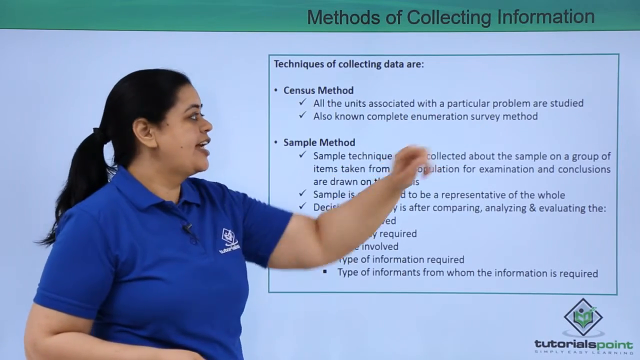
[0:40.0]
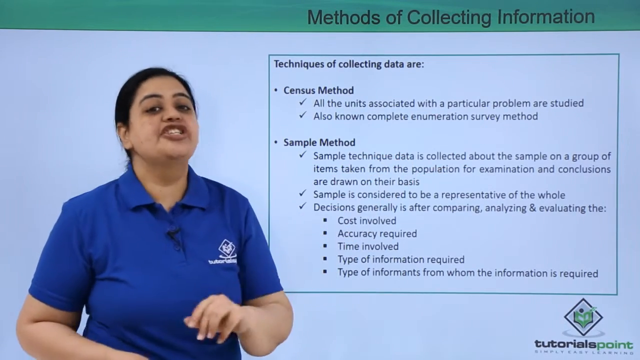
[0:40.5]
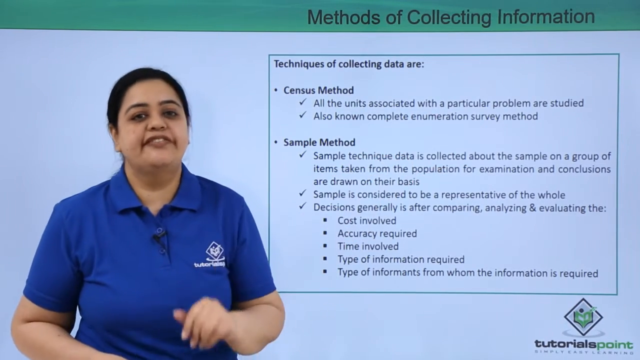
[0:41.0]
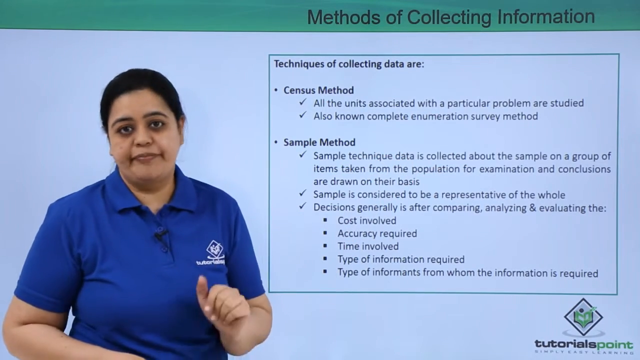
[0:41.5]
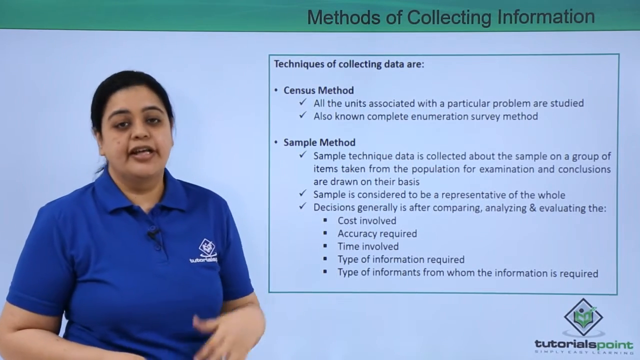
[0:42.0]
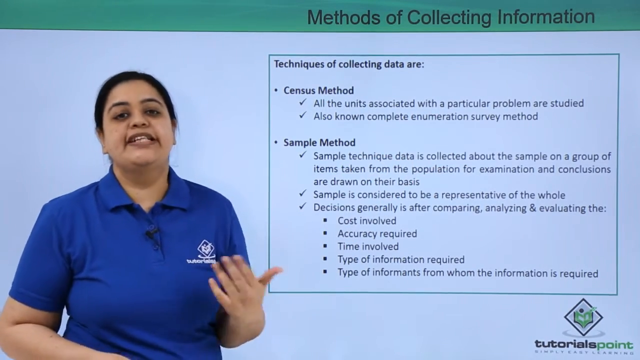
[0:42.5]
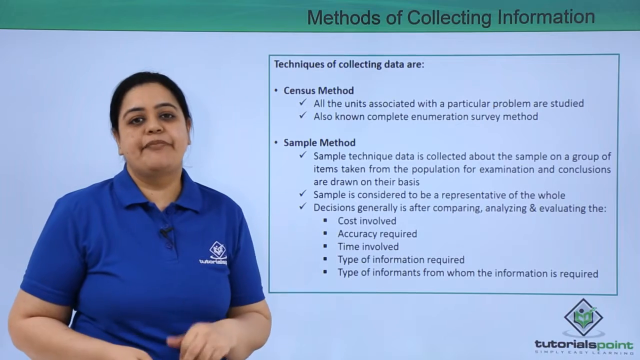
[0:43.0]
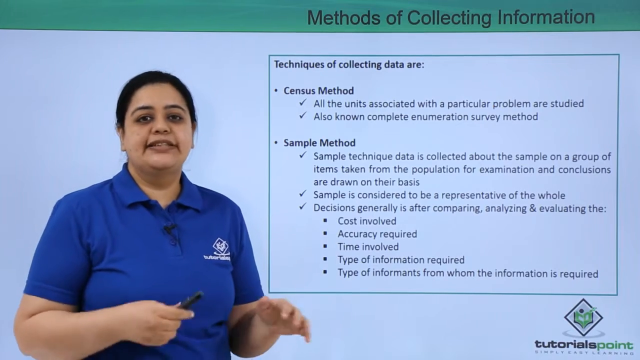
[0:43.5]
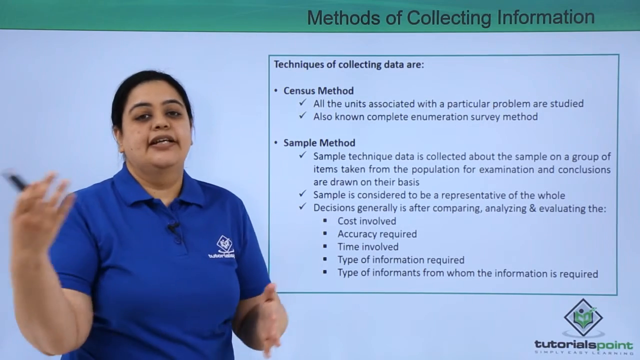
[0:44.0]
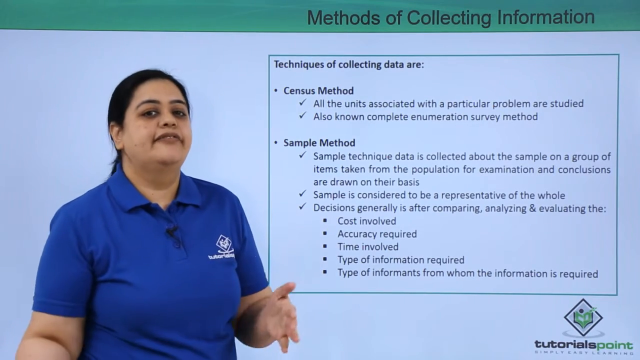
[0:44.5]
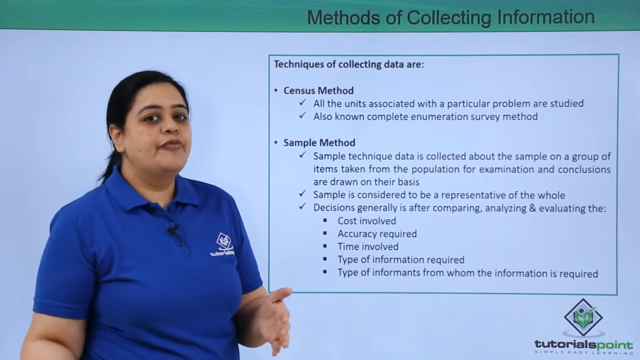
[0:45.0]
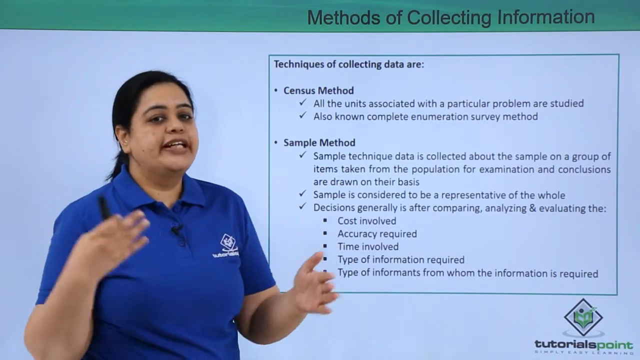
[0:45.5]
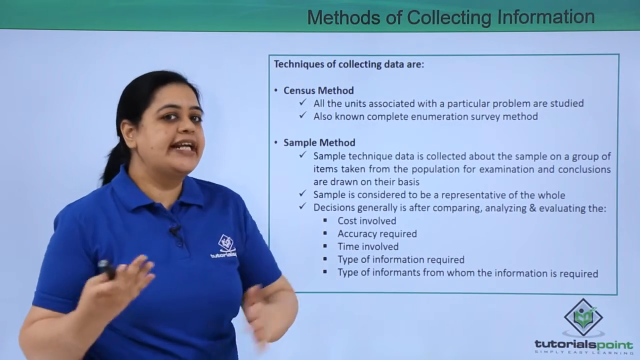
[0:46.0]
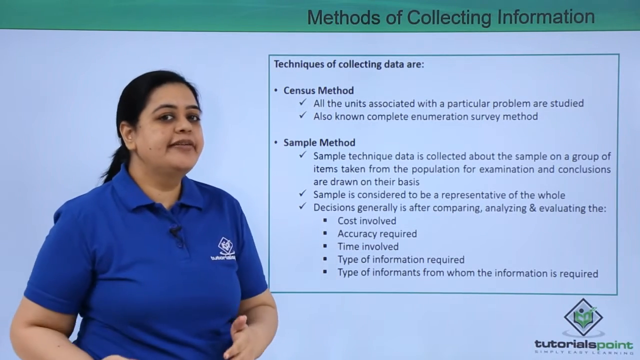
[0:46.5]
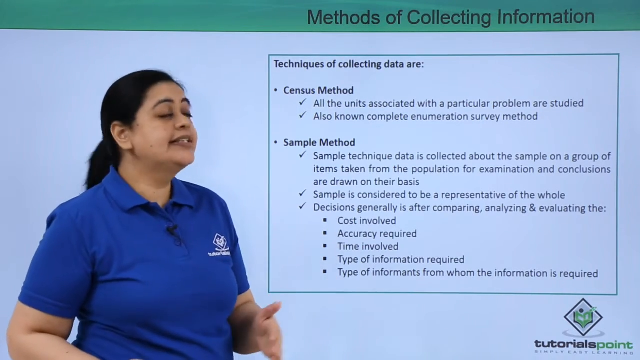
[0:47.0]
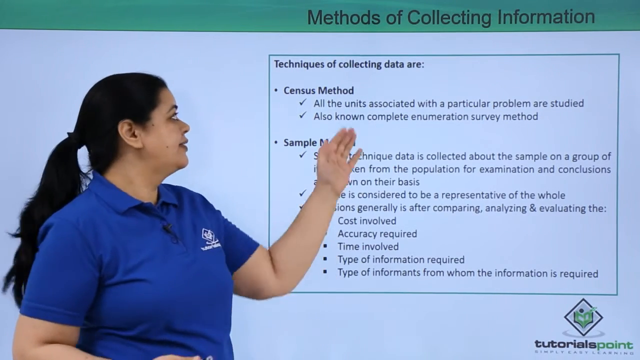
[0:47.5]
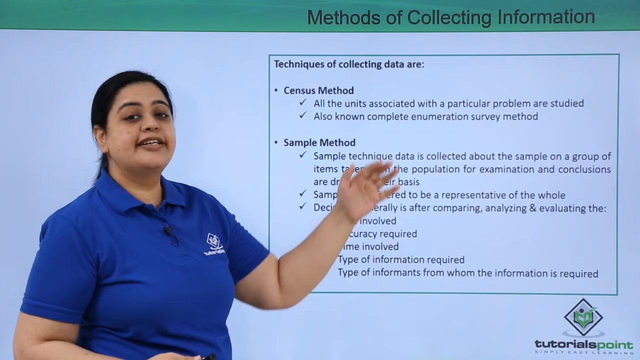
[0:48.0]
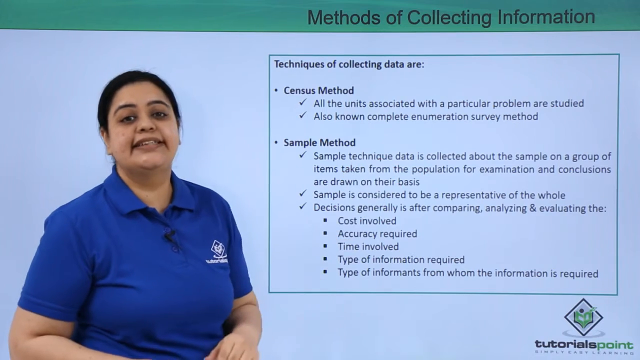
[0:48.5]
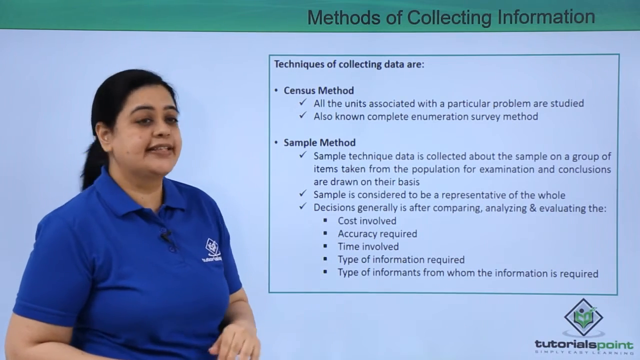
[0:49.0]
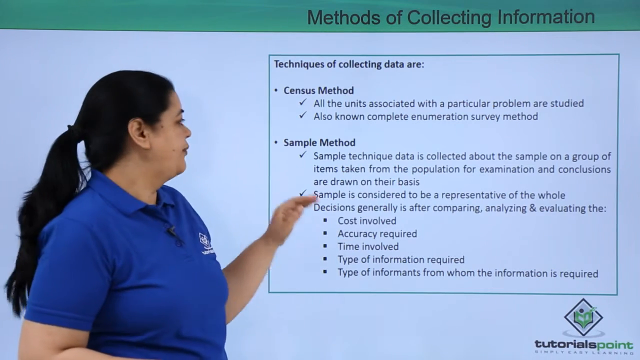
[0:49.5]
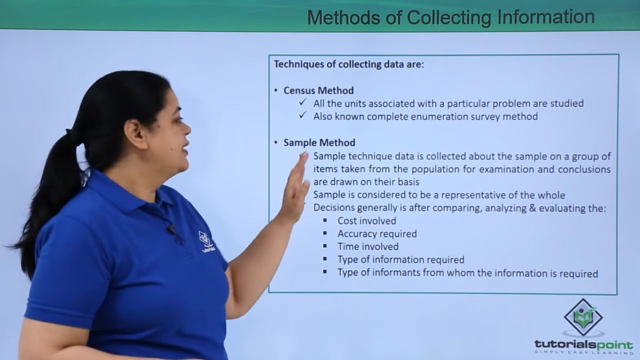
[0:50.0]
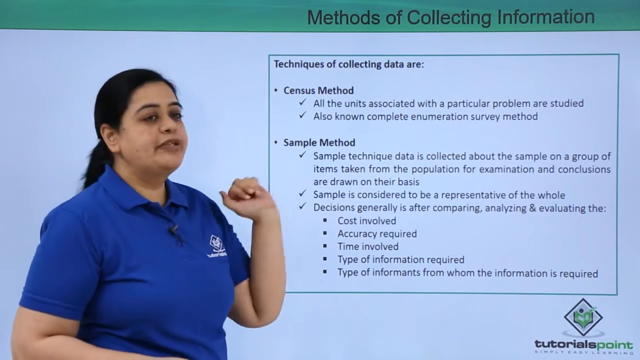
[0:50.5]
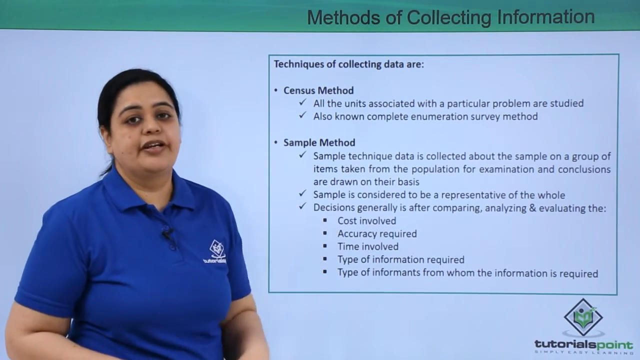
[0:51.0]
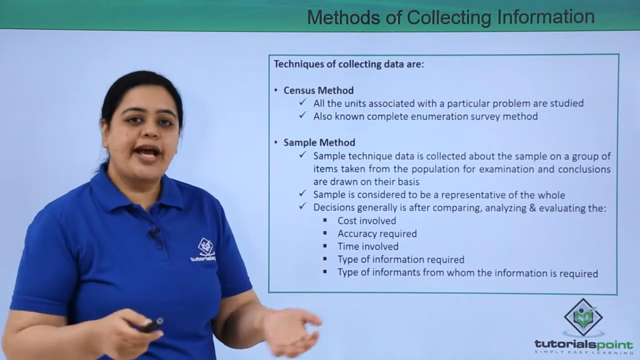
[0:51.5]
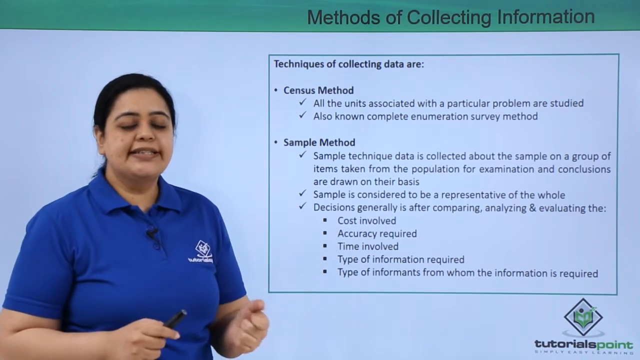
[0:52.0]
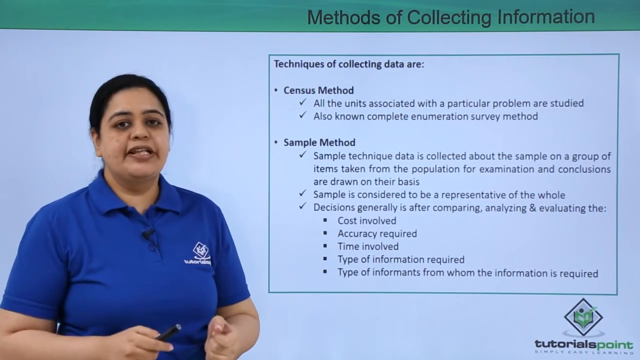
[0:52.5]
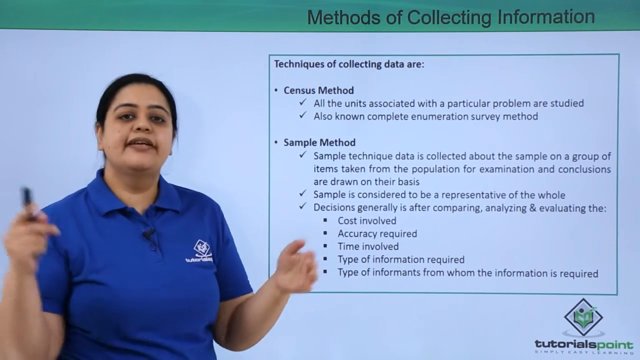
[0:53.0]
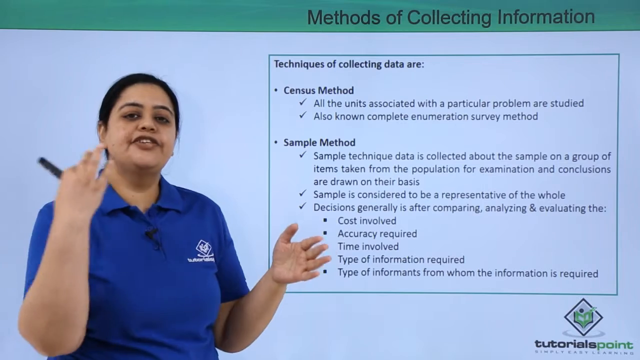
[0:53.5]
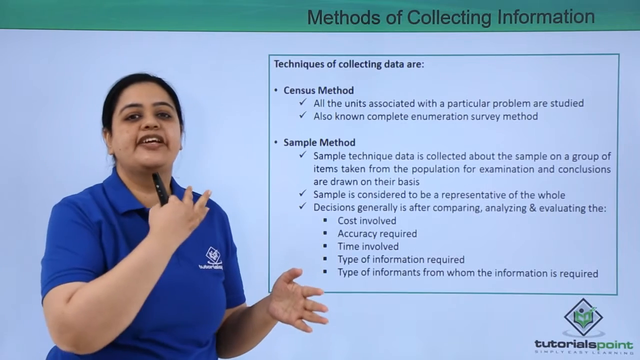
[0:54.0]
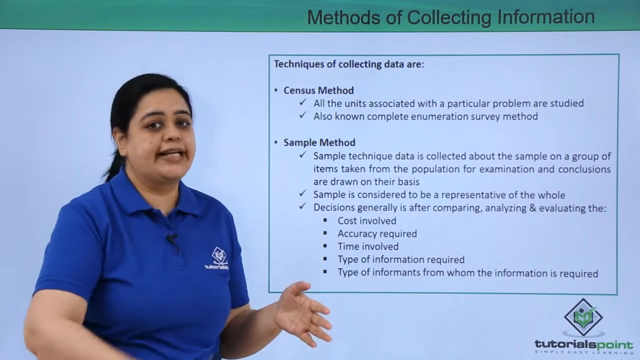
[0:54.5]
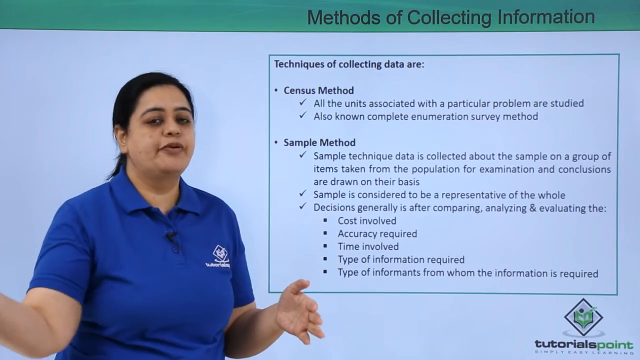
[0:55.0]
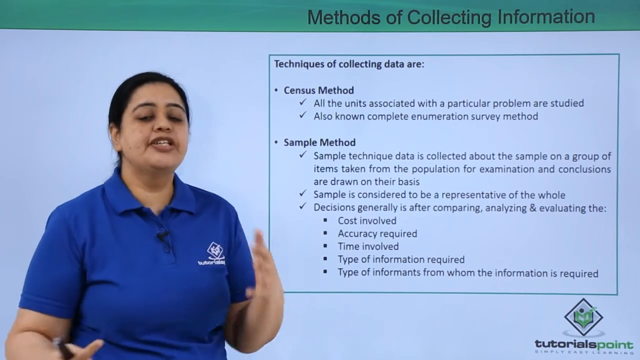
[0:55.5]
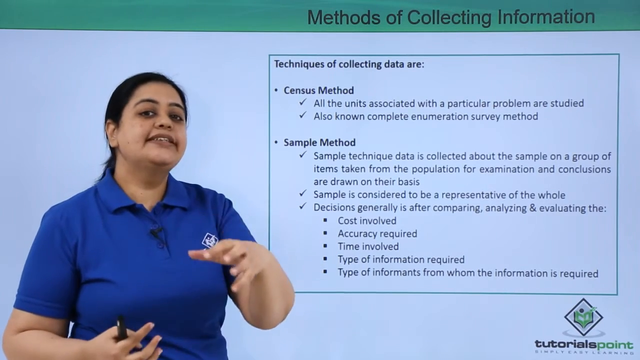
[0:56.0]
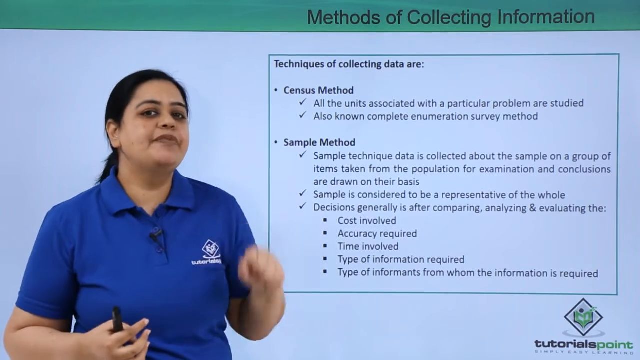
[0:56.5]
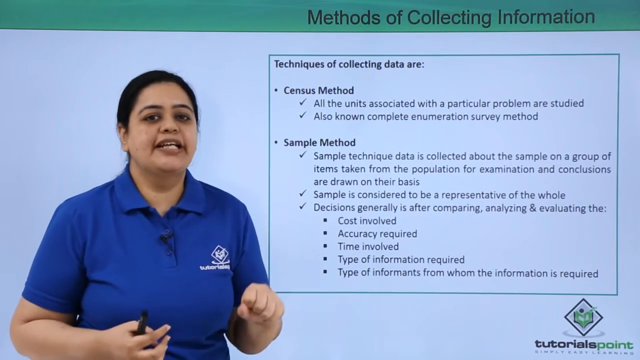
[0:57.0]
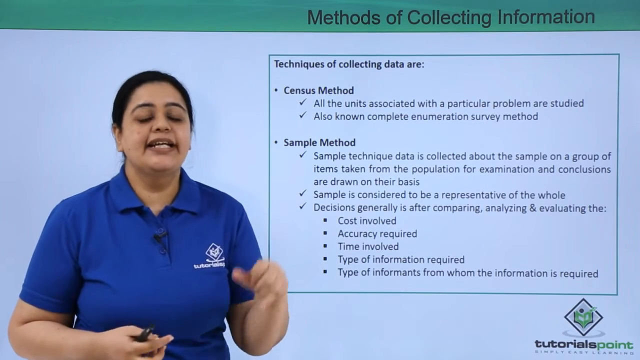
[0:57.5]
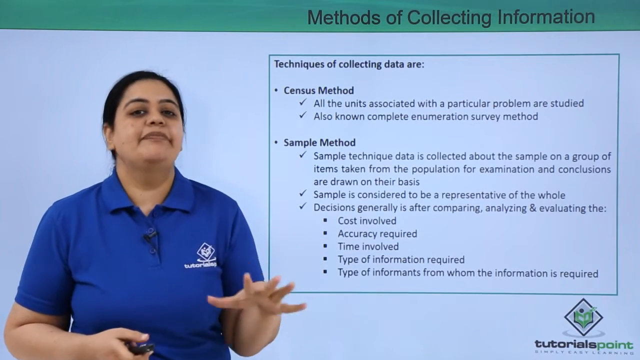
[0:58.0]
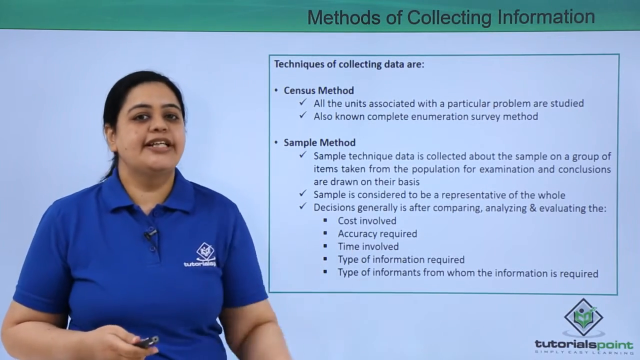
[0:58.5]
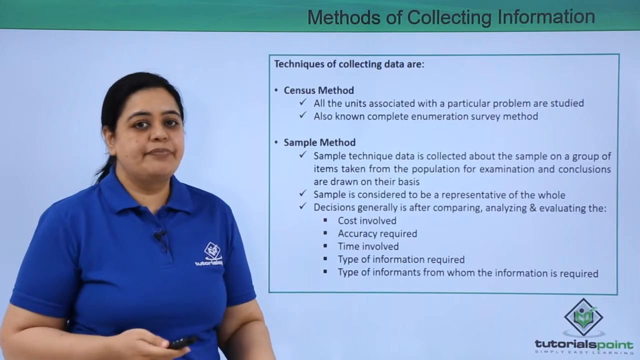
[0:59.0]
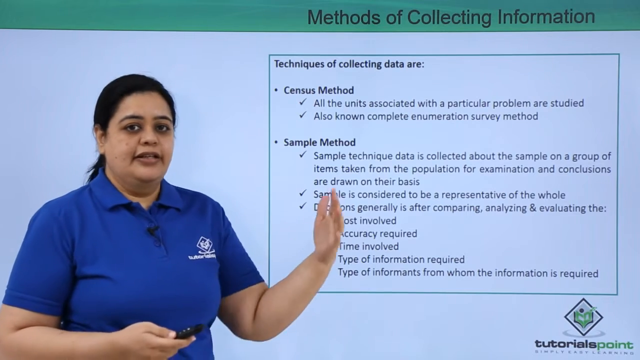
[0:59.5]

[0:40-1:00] The woman, the only person in the video, continues her lecture on the topic "methods of collecting information". She wears the blue uniform polo shirt, and Tutorials Point apparently appears behind her at one point on the PowerPoint presentation. She still holds the black marker in one of her hands. She gestures quite a bit and sometimes points to the text behind her on the presentation. There are no glitches this time. The setting is a room where she stands in front of a PowerPoint or projector-type presentation. Her hair is long and dark or black.